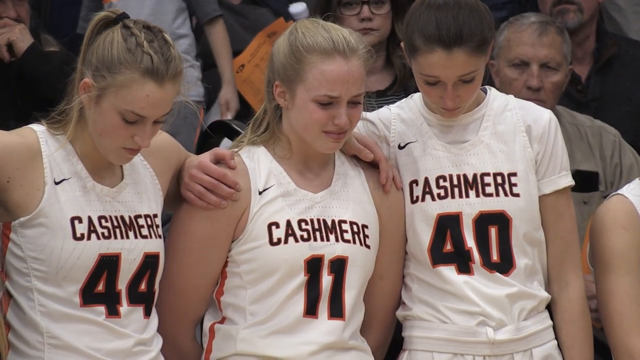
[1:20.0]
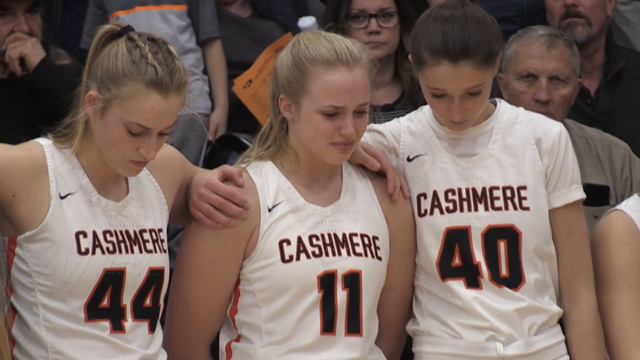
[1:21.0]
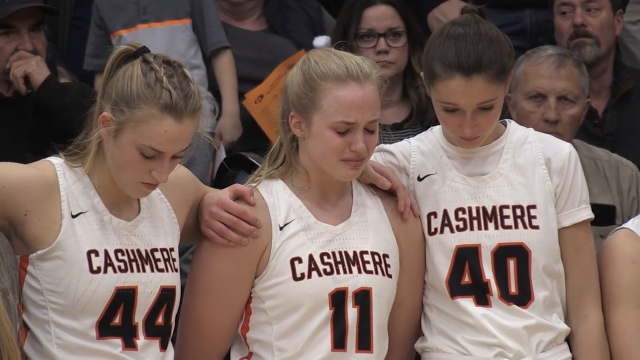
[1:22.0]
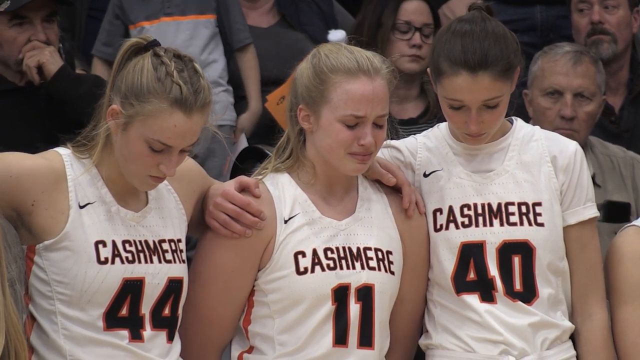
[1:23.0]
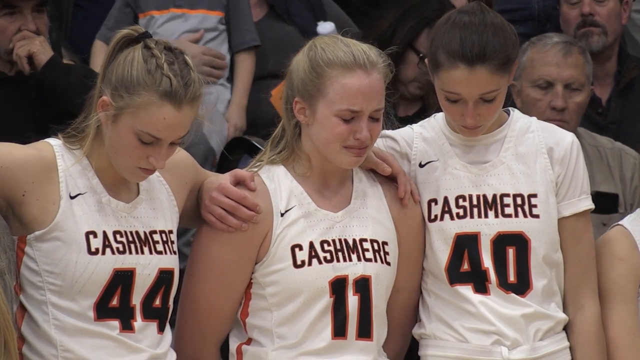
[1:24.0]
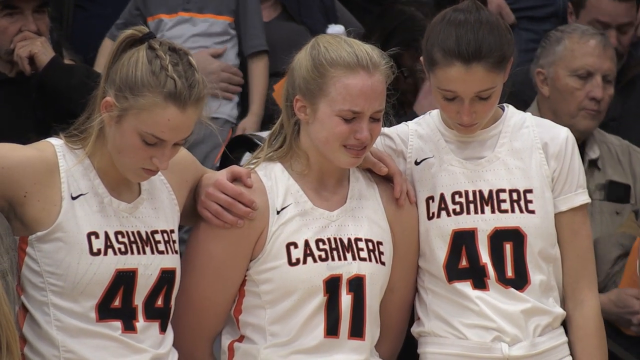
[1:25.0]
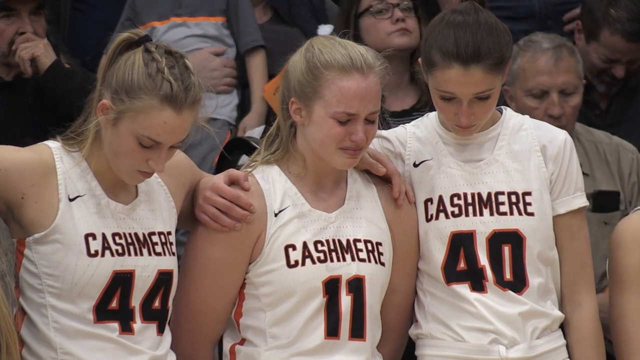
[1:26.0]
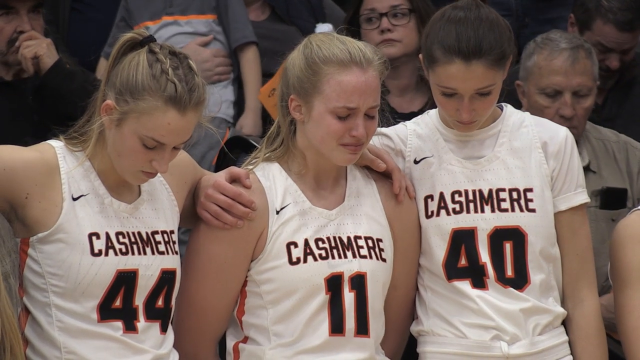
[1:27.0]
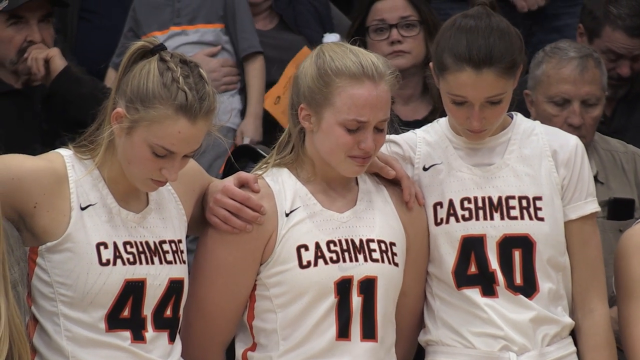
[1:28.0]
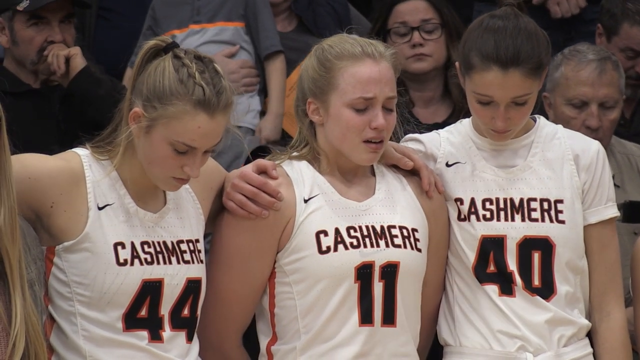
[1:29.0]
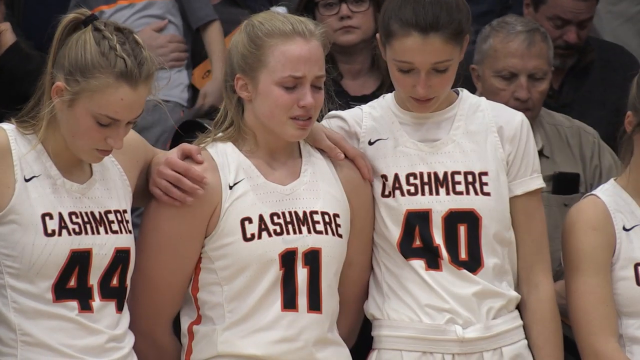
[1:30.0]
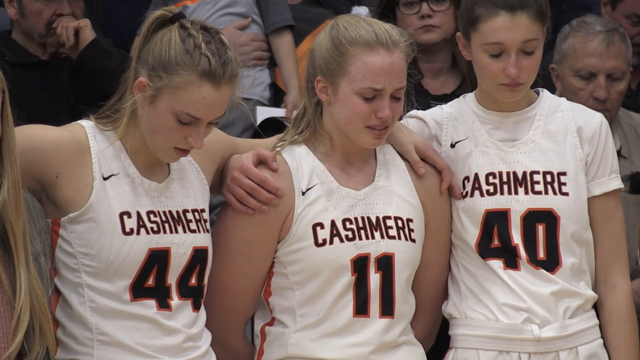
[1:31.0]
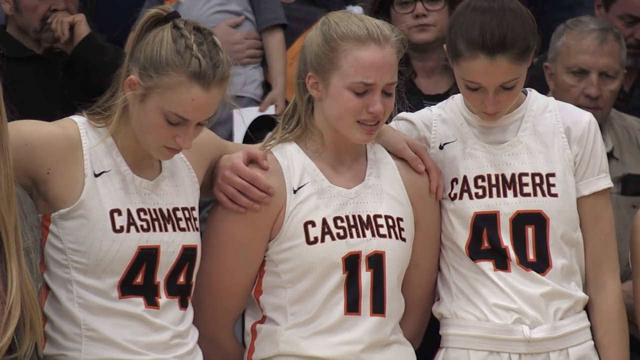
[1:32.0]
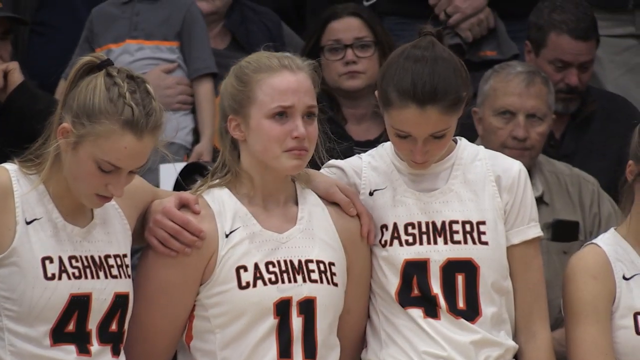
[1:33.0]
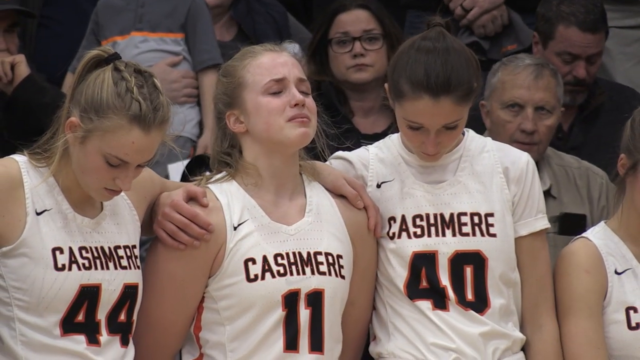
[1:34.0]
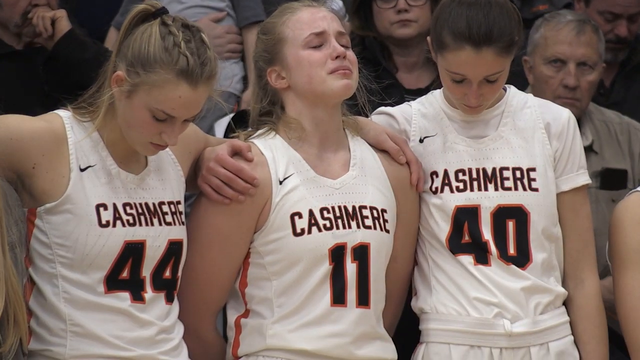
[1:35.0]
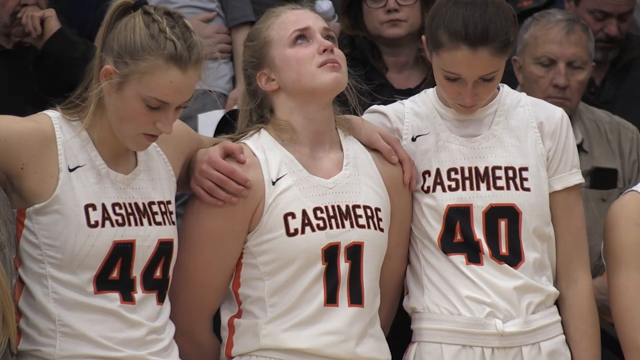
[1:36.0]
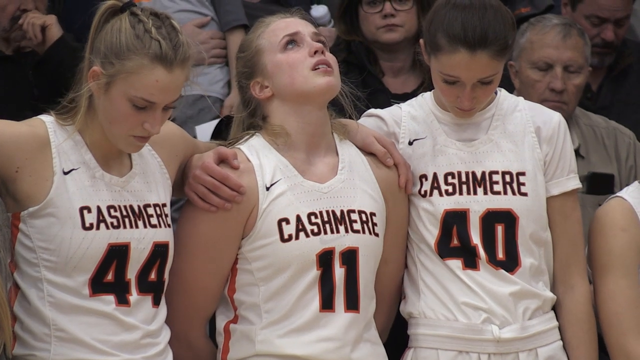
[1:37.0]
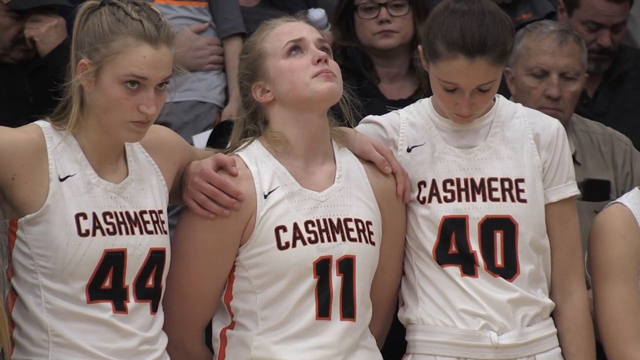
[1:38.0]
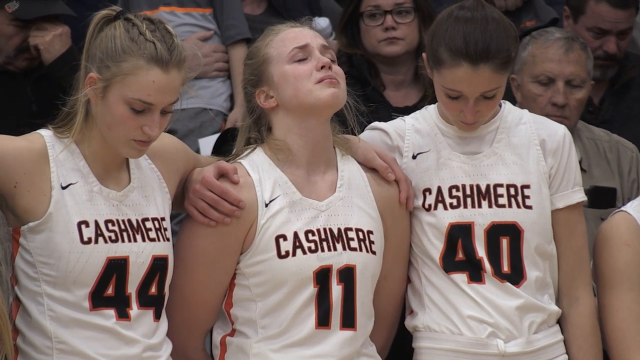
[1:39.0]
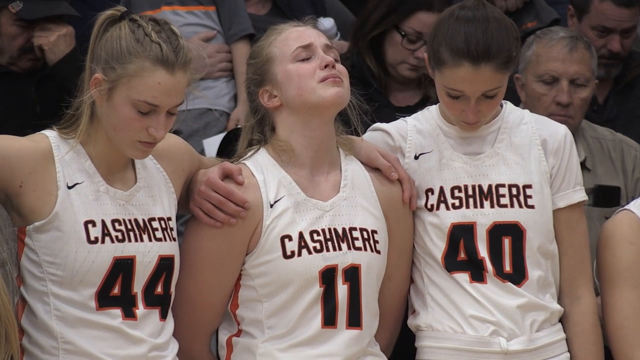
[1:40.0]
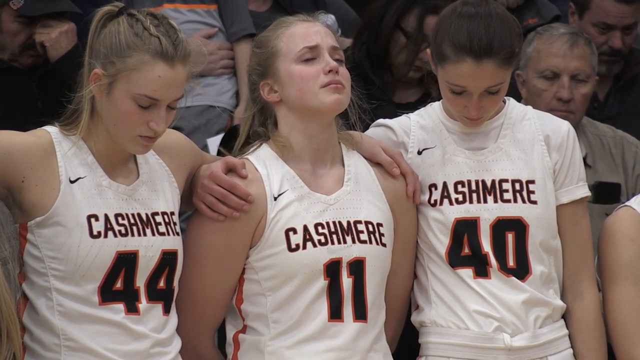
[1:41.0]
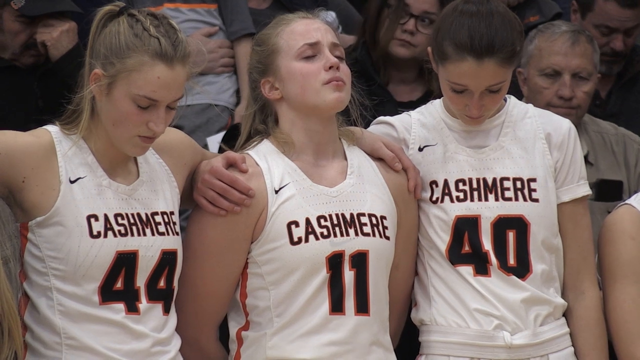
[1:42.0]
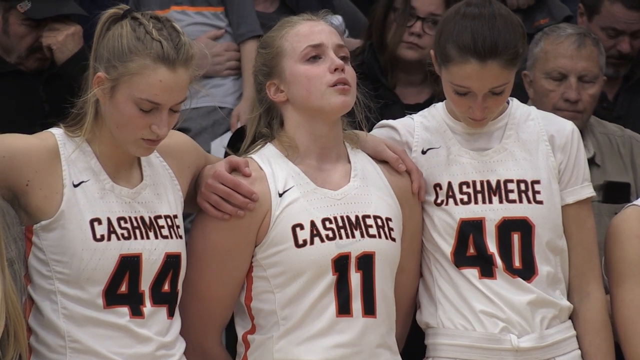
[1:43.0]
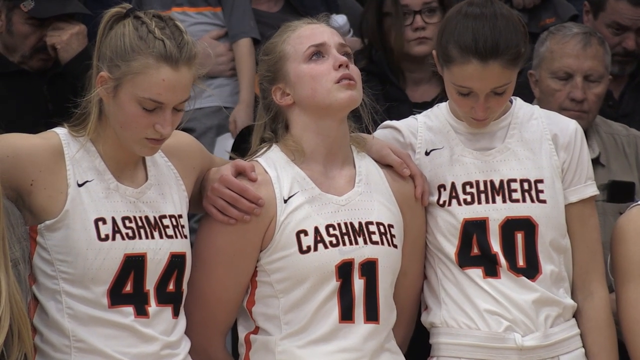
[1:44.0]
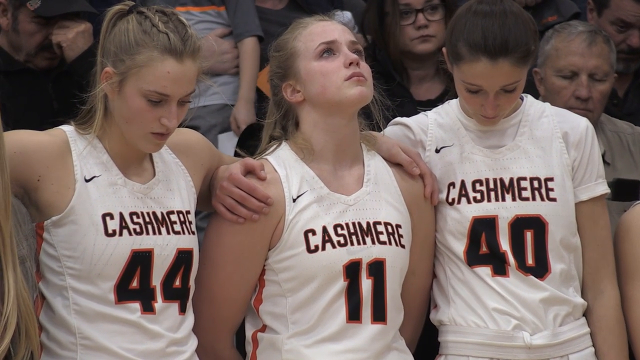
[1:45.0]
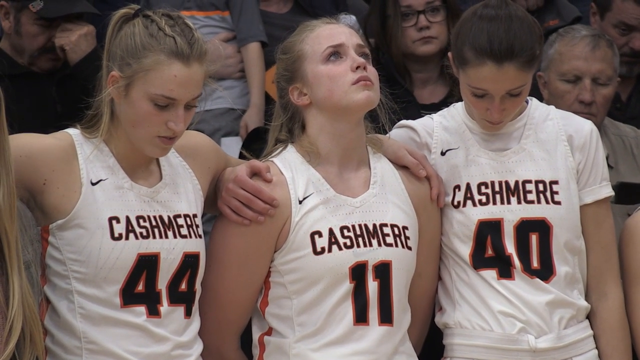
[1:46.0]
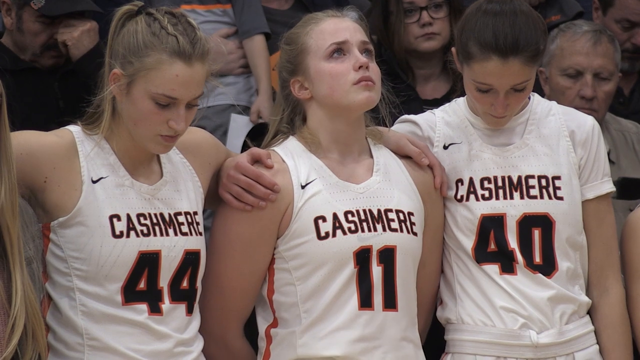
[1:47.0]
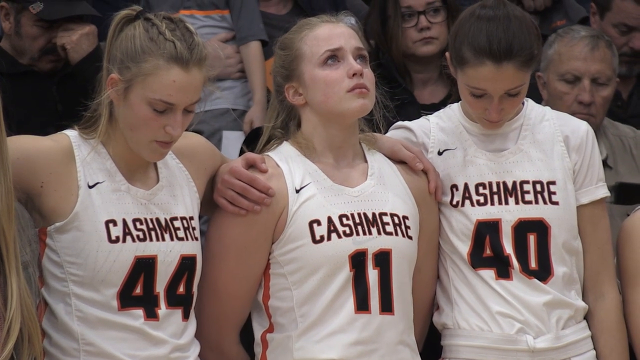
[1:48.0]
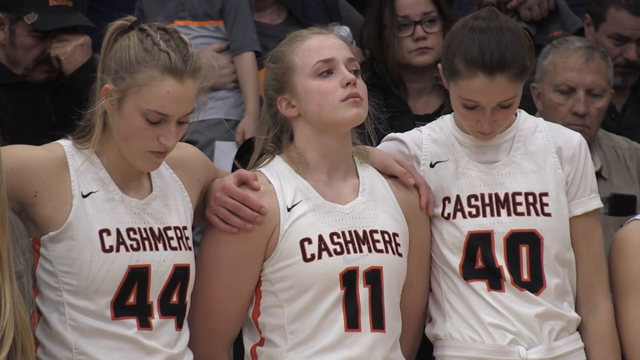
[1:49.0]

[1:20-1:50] The three female basketball players are still on the sideline. The one in the center keeps fighting back tears and starts to break down a little, kind of swaying side to side as she begins to cry. She takes a deep breath to compose herself; having been looking down, she looks straight ahead, opens her eyes, closes them again and looks up. She then looks straight up with her eyes open, closes them again, and takes several more deep breaths. Meanwhile, the players on both her sides are looking down with what look to be their eyes closed.